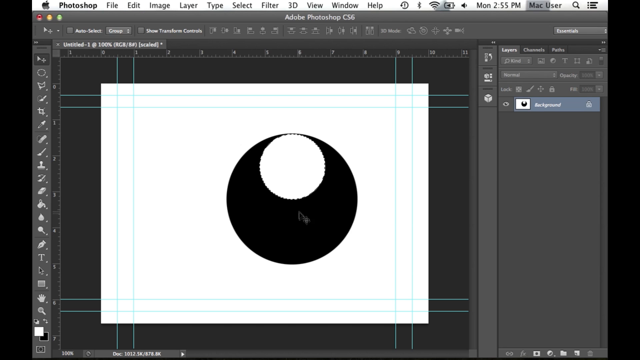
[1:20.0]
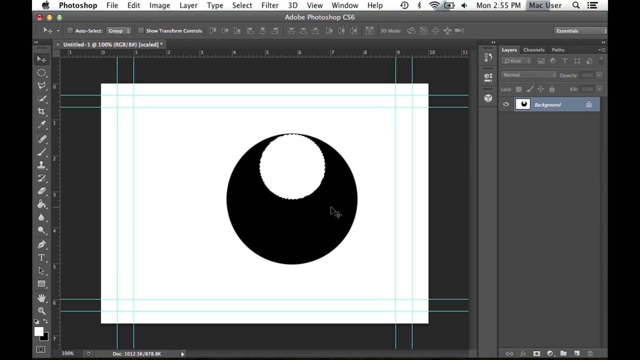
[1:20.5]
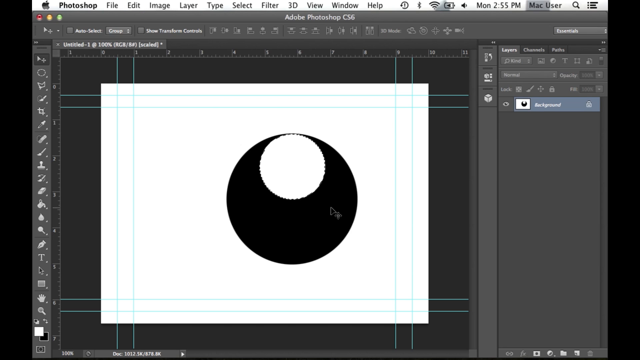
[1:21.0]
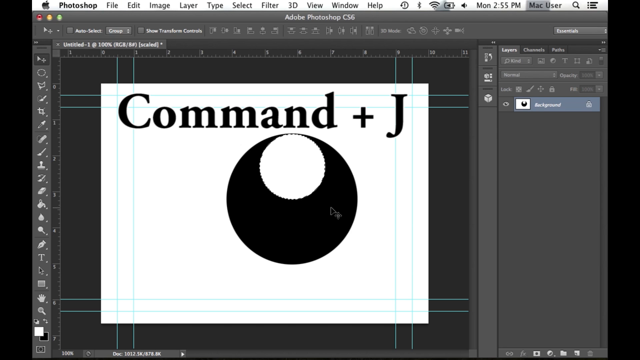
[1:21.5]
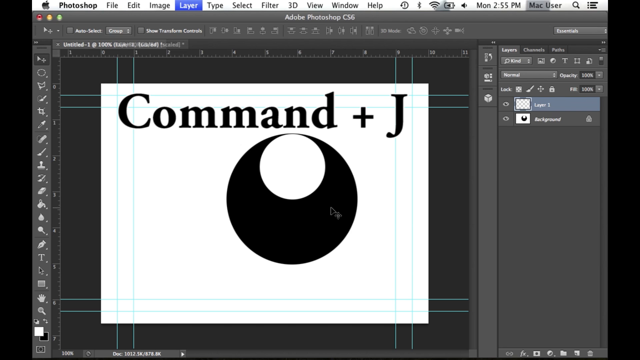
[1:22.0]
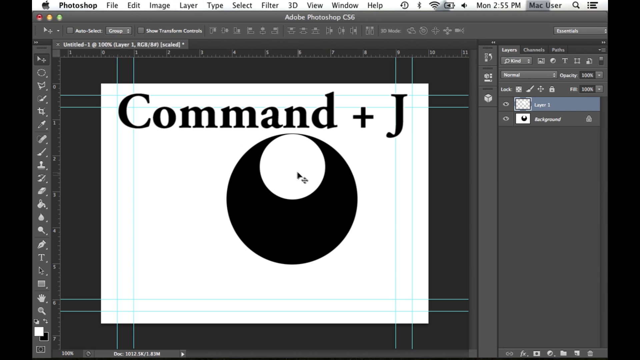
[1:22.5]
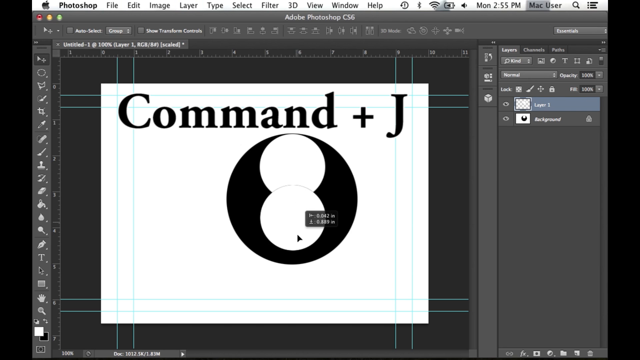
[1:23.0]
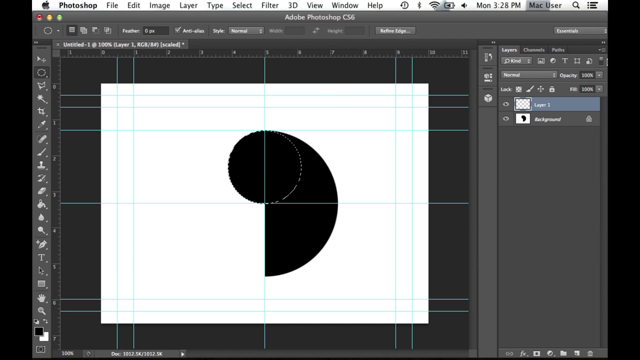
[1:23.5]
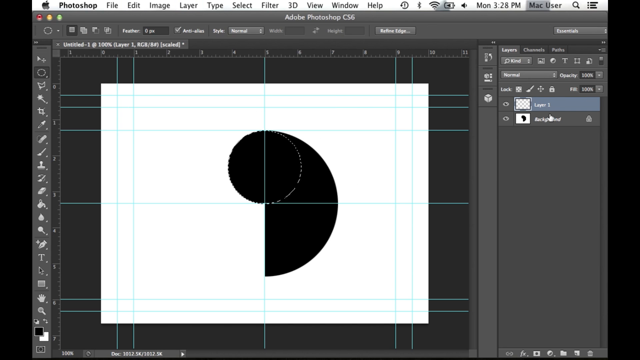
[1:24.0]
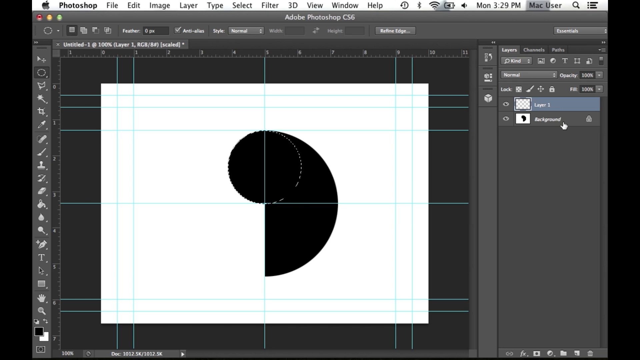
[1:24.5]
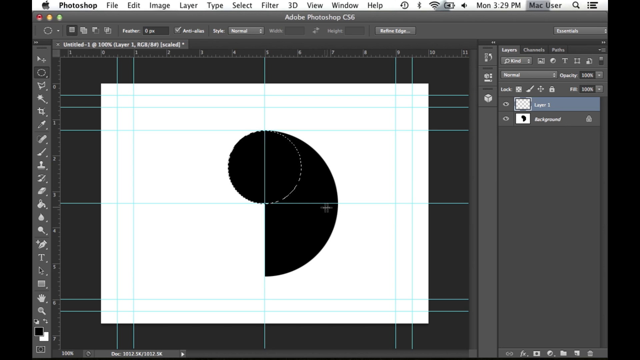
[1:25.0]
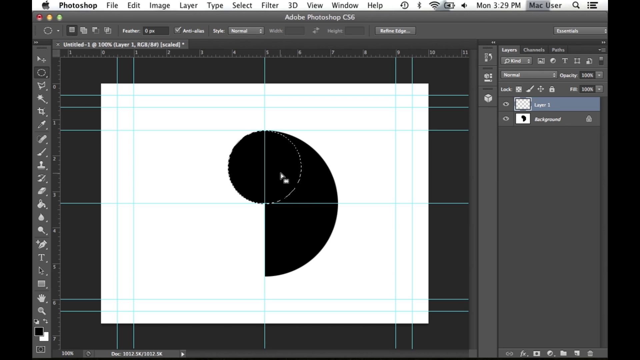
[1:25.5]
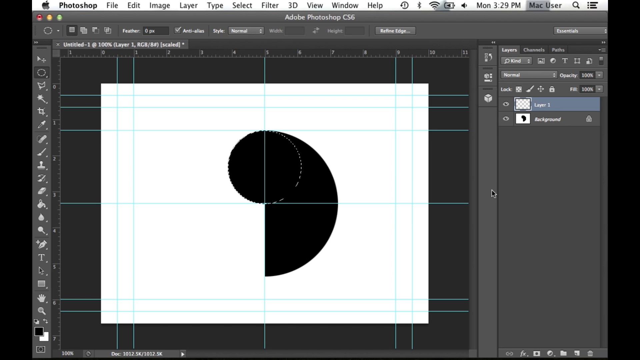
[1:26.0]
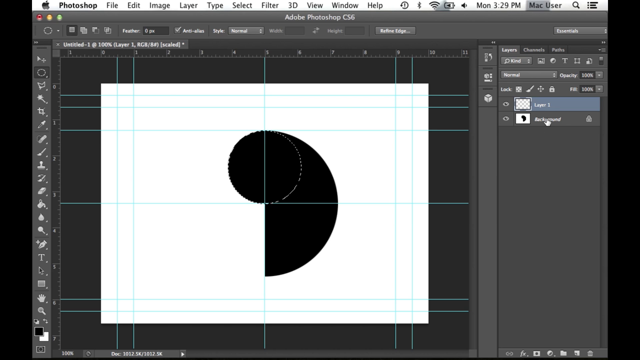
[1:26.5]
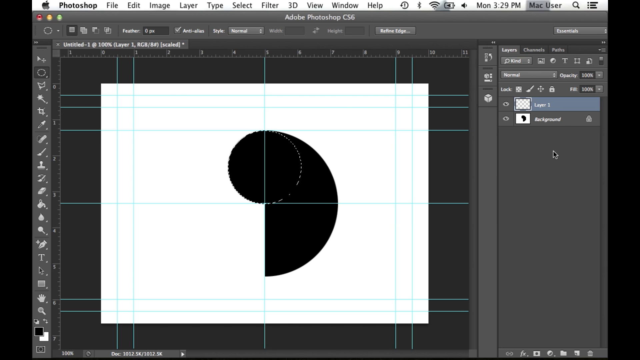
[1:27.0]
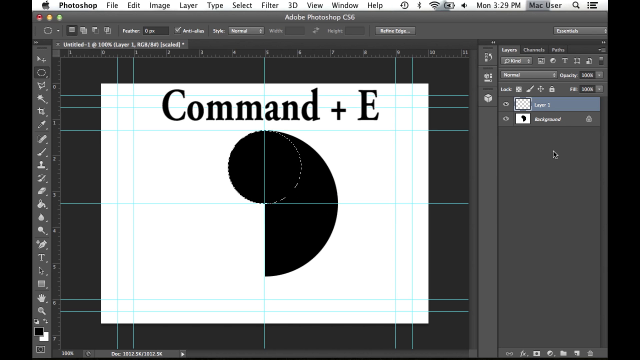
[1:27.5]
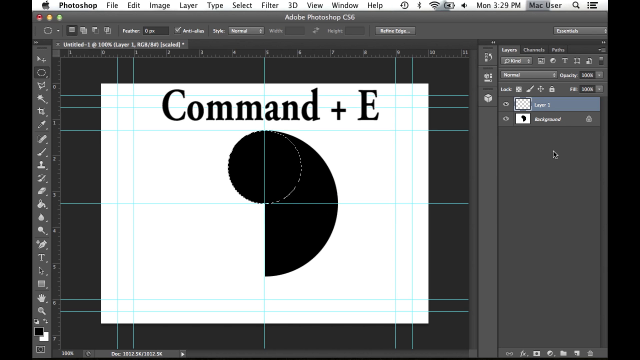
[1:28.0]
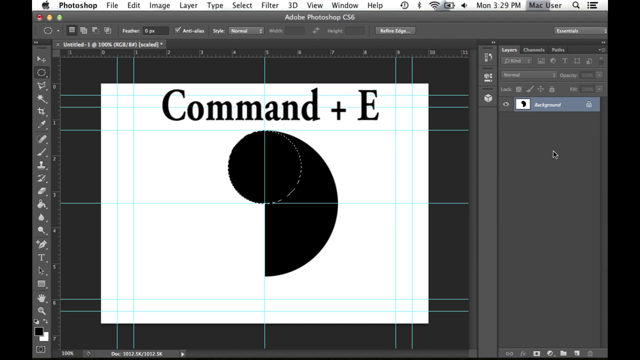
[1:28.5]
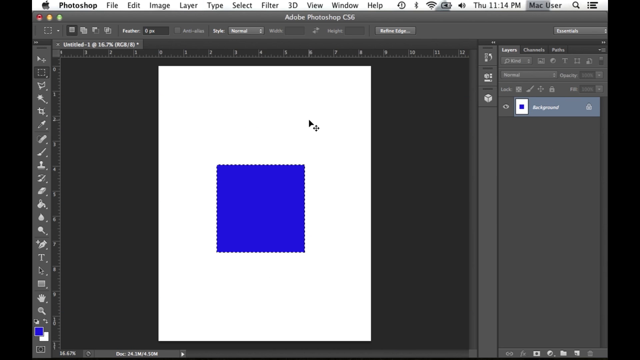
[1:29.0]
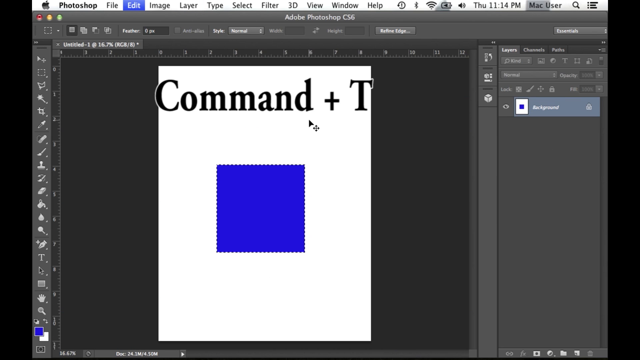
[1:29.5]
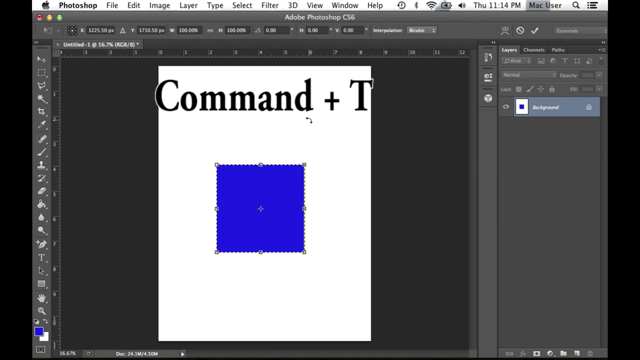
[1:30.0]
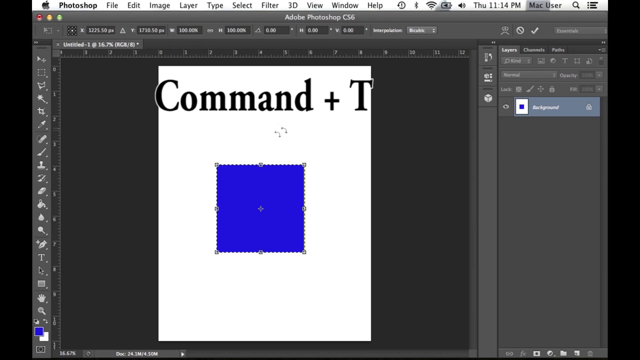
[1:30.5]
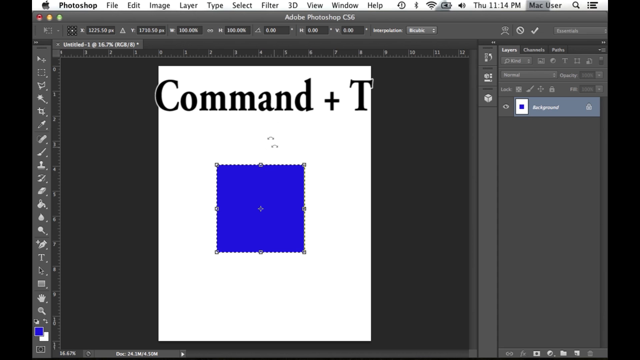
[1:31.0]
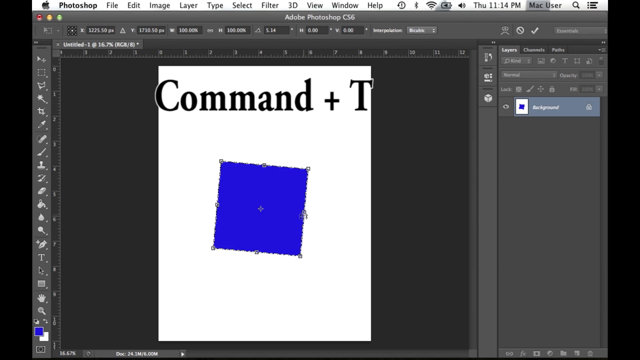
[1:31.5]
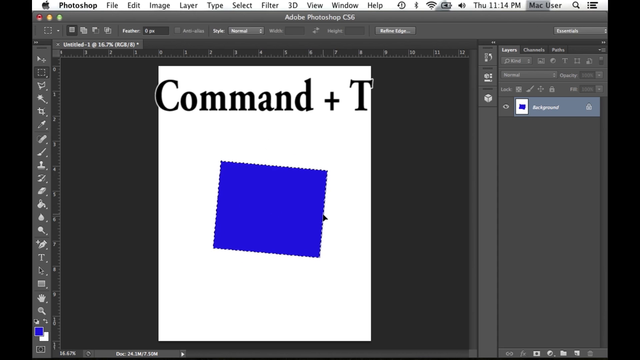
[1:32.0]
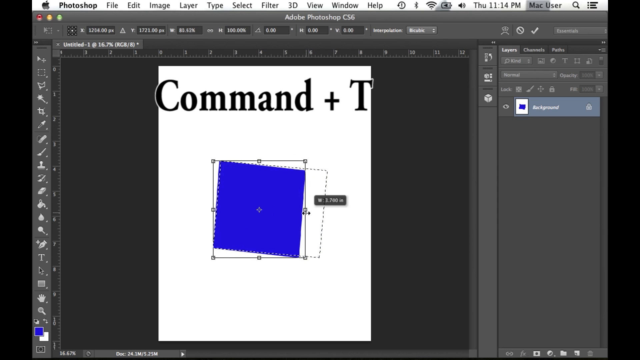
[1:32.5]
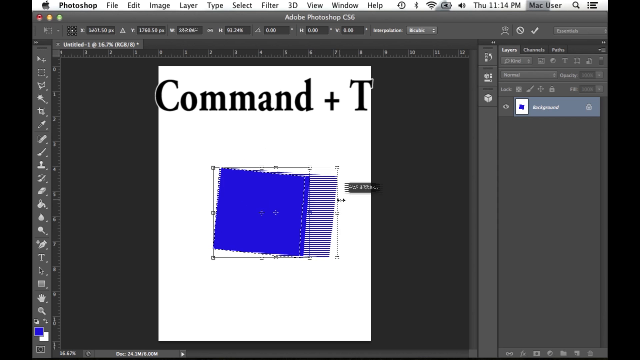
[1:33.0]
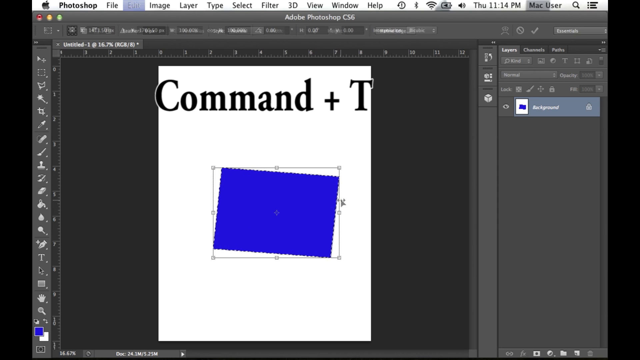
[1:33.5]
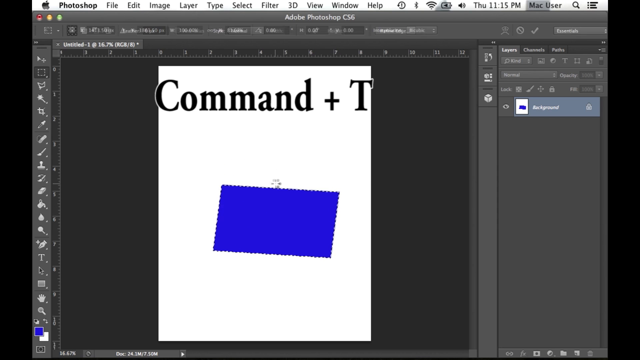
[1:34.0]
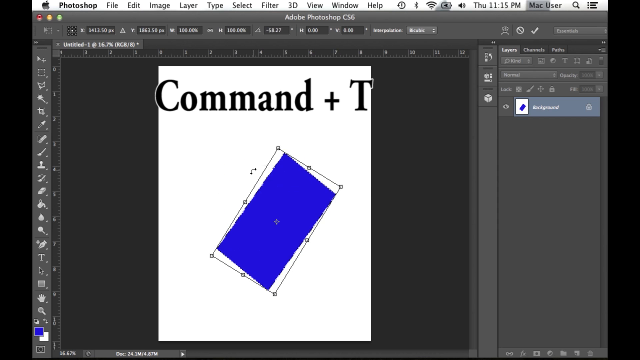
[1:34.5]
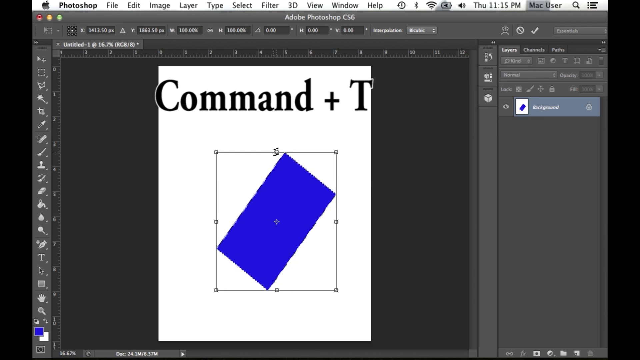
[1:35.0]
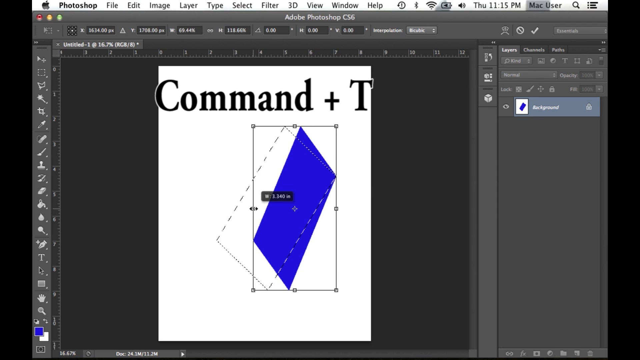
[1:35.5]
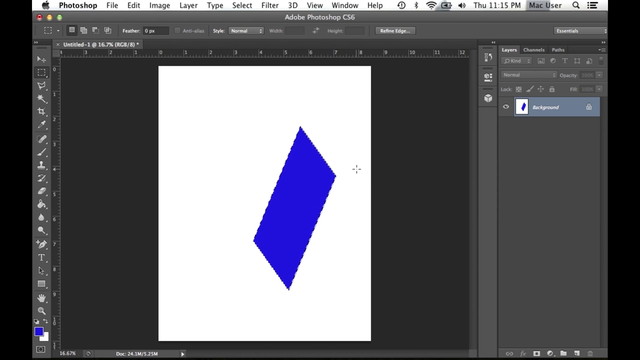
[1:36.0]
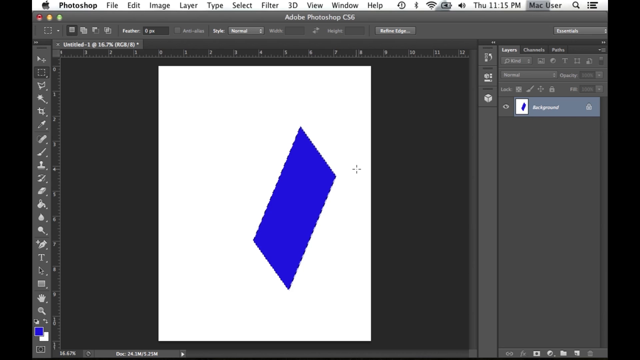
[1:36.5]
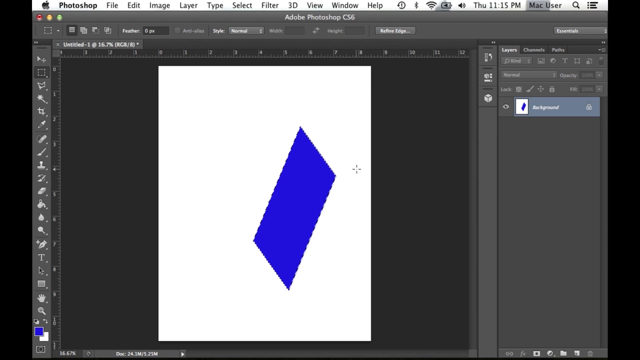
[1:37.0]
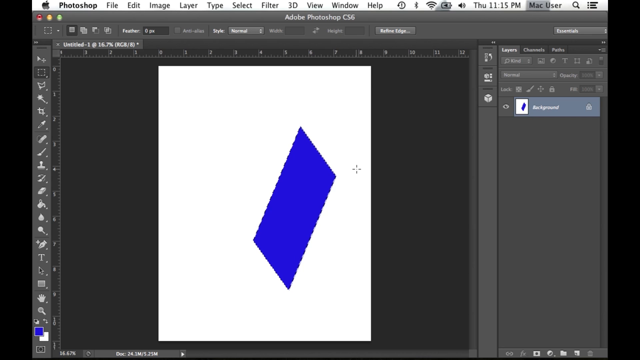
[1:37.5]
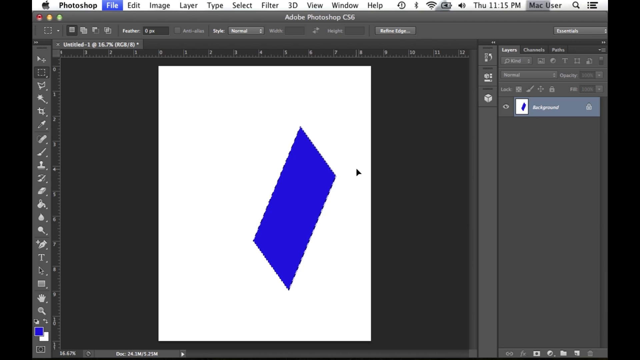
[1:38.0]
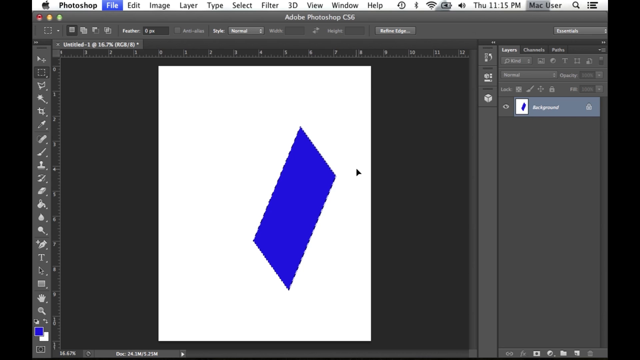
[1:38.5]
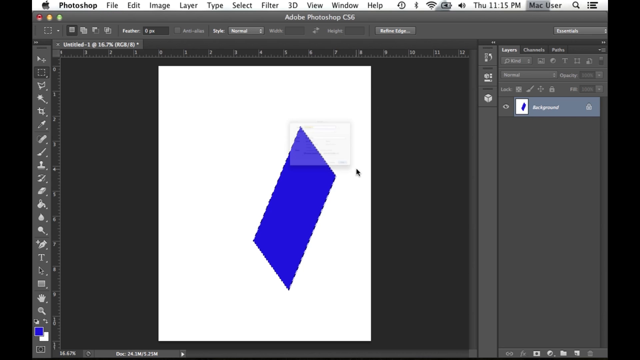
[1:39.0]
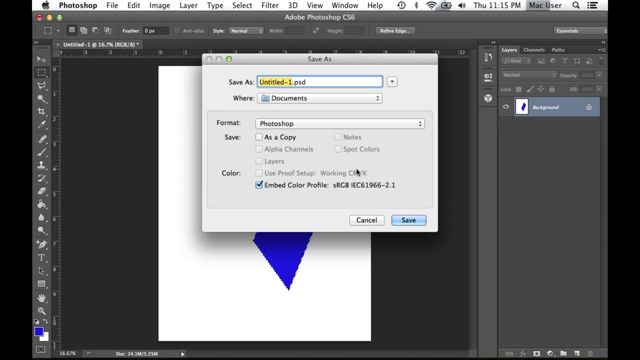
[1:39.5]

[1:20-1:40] The video is a little wider than it is tall, with black letterboxing on the left and right. In the center, Photoshop is open on a Mac desktop, indicated by the Apple in the upper left followed by "Photoshop". The typical Photoshop menu is to the right of those at the top of the screen: file, edit, image, layer, type, select, filter, 3D, view, window and help. In the center is the white work area, which has been blown up a little. Just right of center is a big circle filled in with black, and a smaller white circle has been made at the top of it, forming a circle within a circle. As the video progresses, black text comes up at the top reading "command plus J". Another white circle is then placed below the existing white circle, within the black circle.